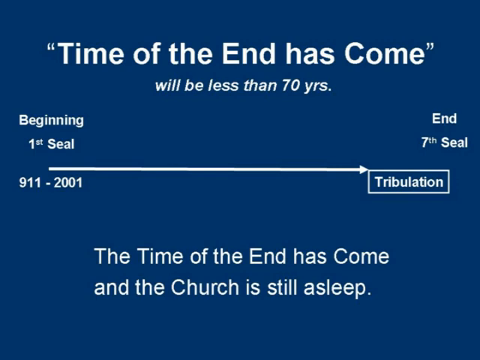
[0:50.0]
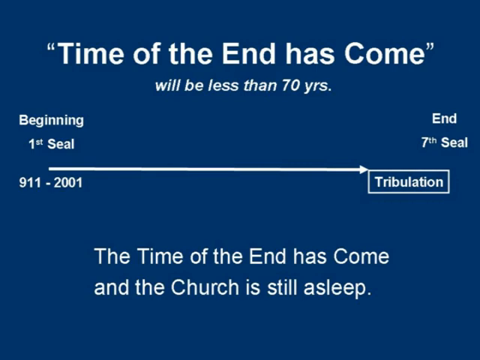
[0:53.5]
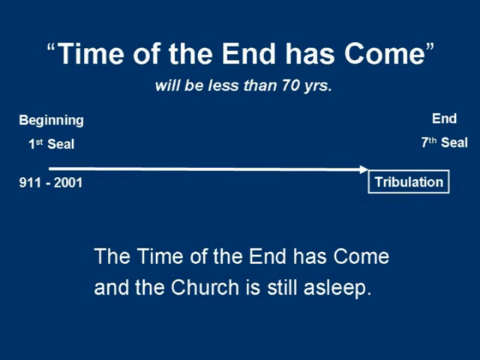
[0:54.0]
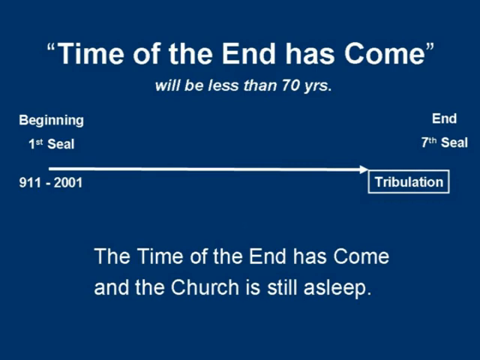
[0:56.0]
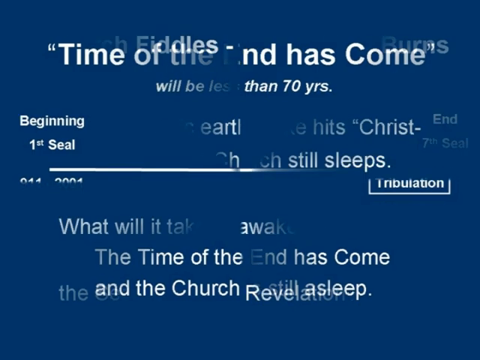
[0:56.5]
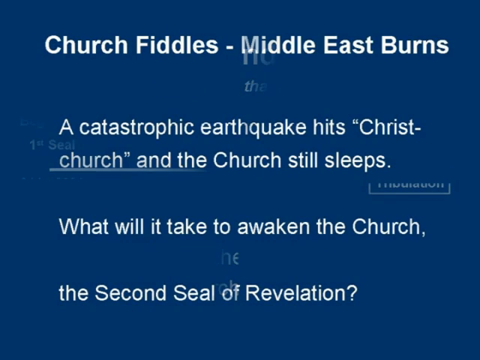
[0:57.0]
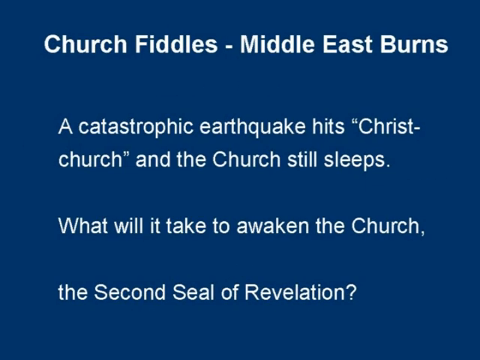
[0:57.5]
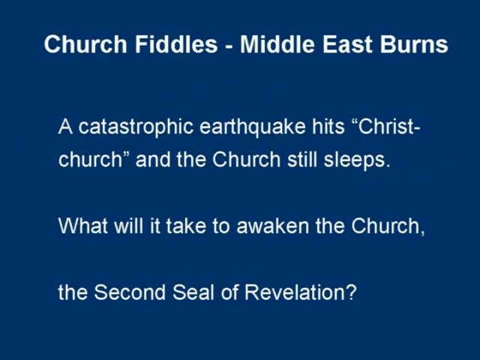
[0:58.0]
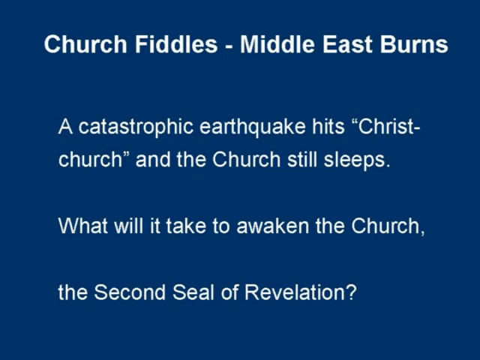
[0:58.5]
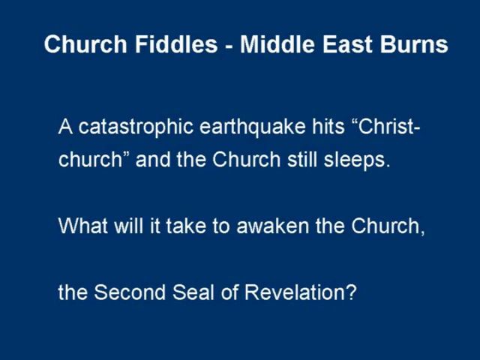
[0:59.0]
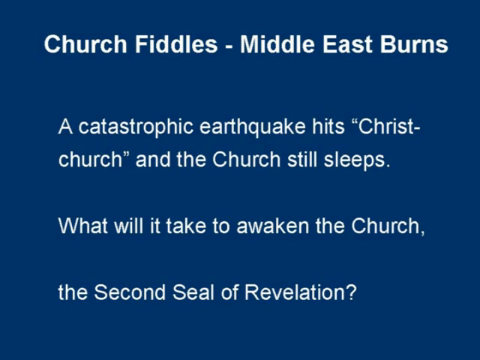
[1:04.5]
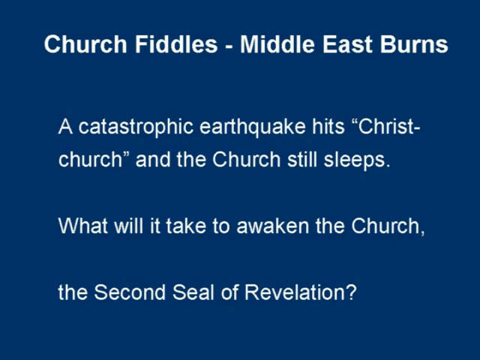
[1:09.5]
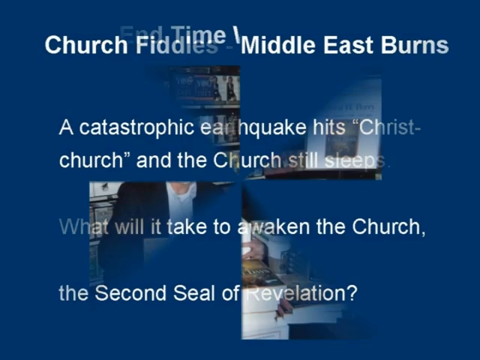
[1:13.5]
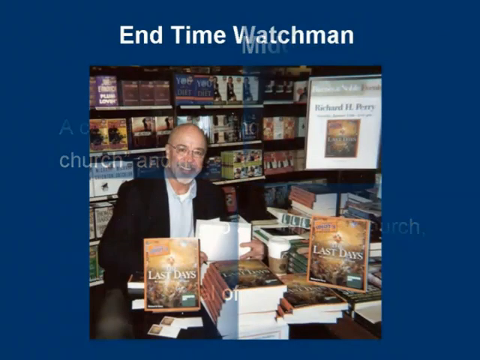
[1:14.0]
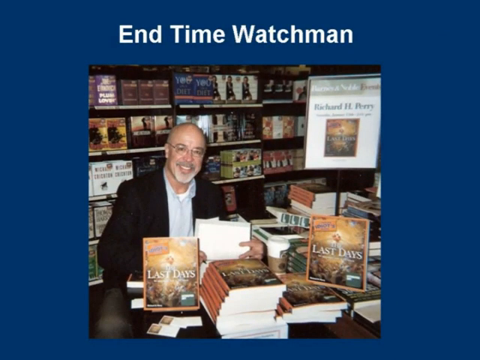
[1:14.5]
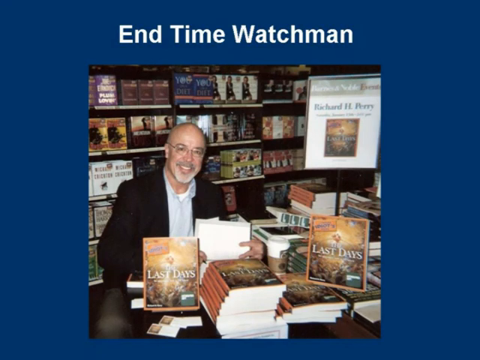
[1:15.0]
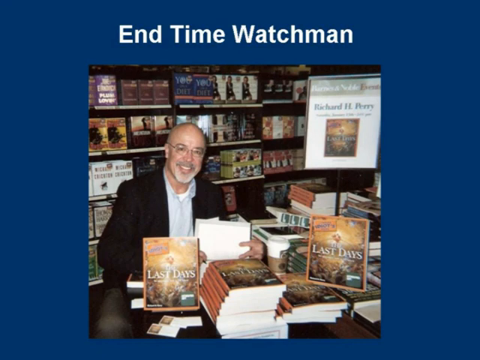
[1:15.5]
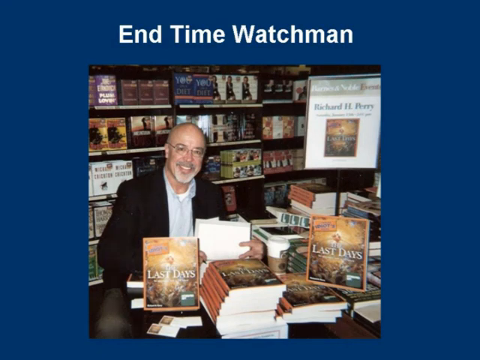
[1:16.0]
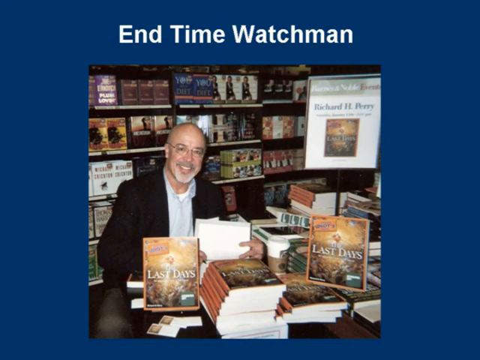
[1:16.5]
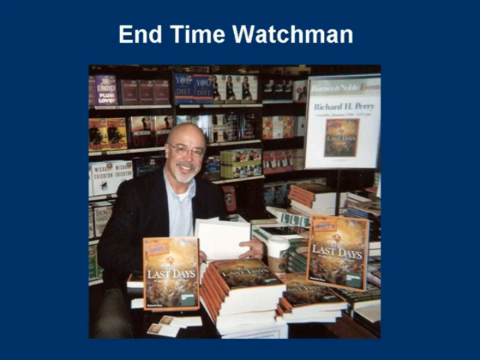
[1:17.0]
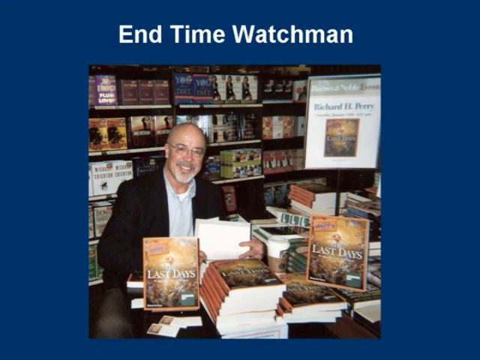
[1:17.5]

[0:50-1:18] A screen shows text reading "Time of the end has come will be less than 70 yrs" at the top. Below that, a long white arrow points to a box that reads "Tribulation." Above the line, the left side says "Beginning 1st Seal" and the right side reads "End 7th Seal." Below the line it reads "911-2001," and at the bottom of the screen the text reads "The Time of the End has Come and the Church is still asleep." This fades to another screen that reads at the top "Church Fiddles--Middle East Burns. A catastrophic earthquake hits Christchurch and the Church still sleeps. What will it take to awaken the church, the second seal of Revelation?" This then fades to a screen with a photo of a man sitting by a table in a bookstore, with stacks of a book called Last Days on the table. Above the photo is text that reads "End Time Watchman."